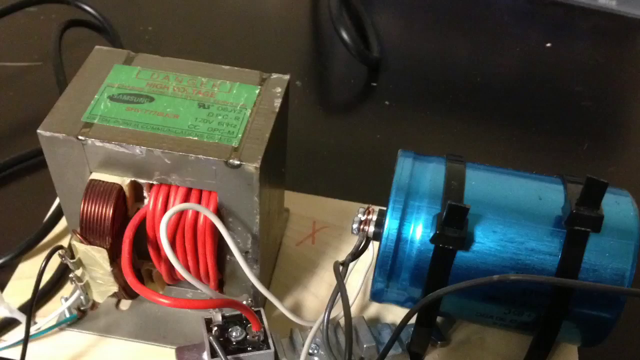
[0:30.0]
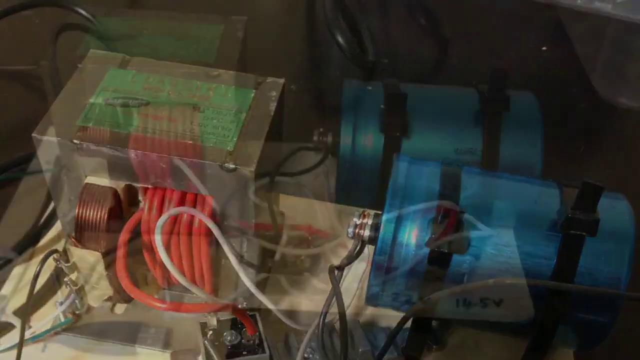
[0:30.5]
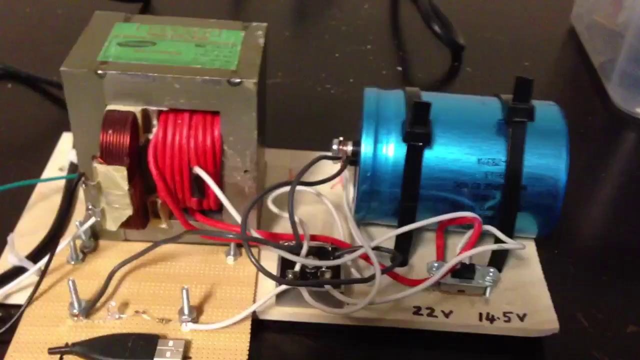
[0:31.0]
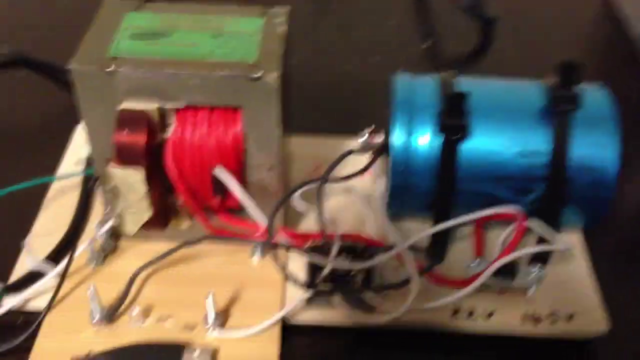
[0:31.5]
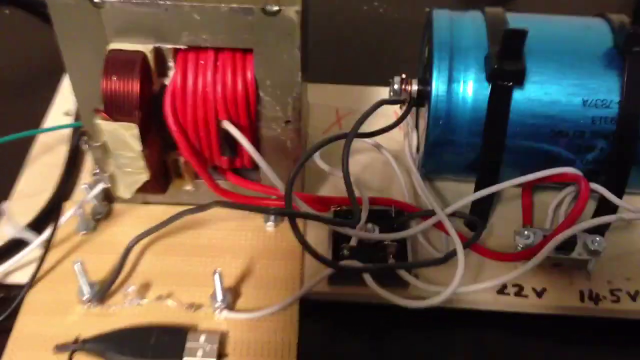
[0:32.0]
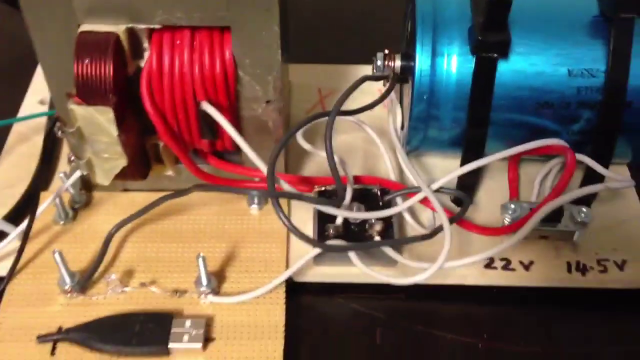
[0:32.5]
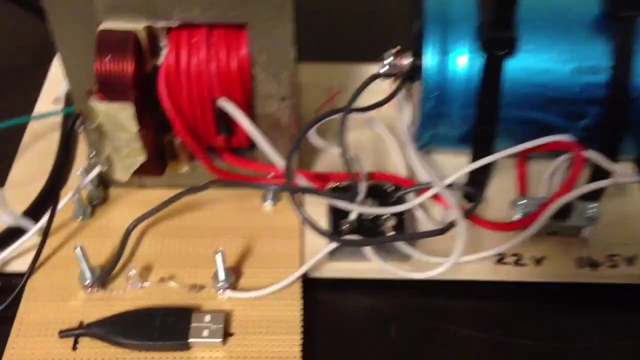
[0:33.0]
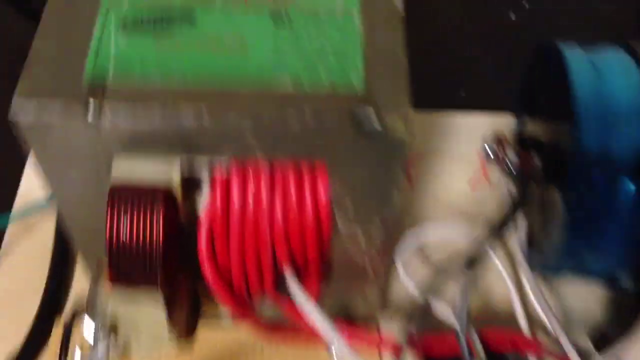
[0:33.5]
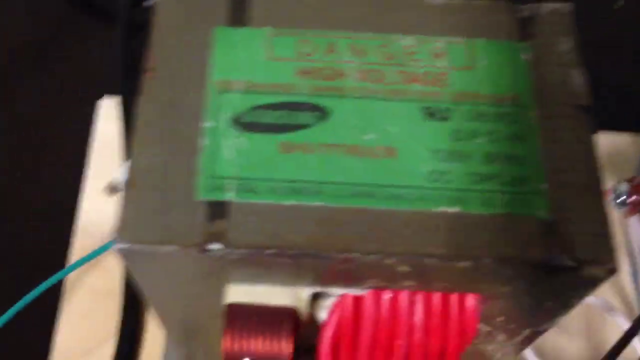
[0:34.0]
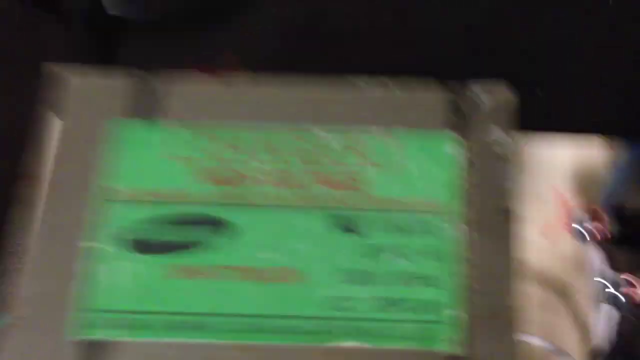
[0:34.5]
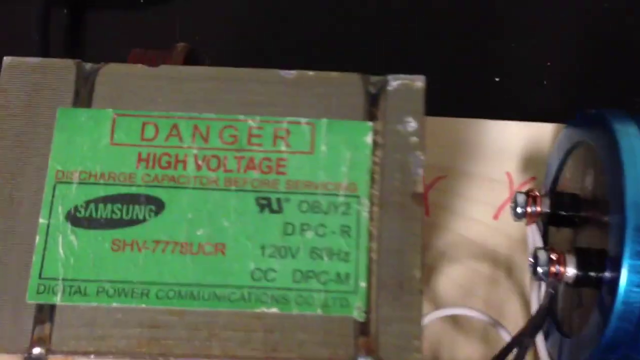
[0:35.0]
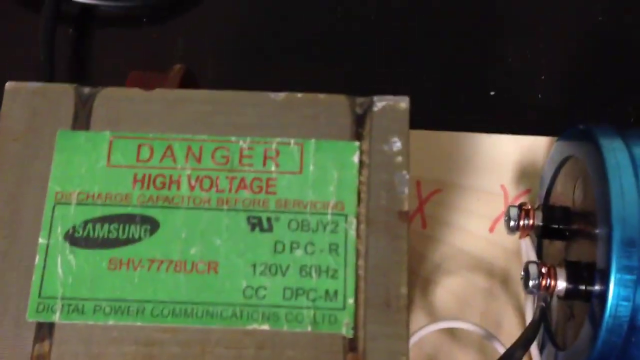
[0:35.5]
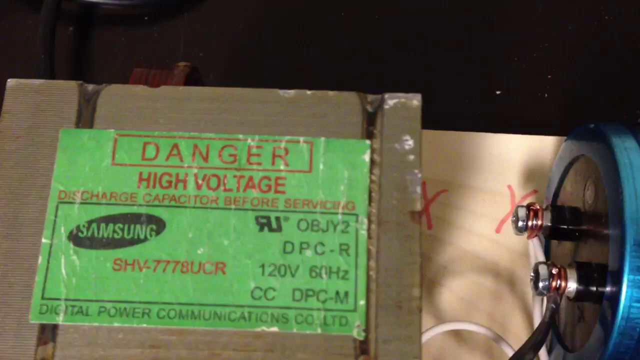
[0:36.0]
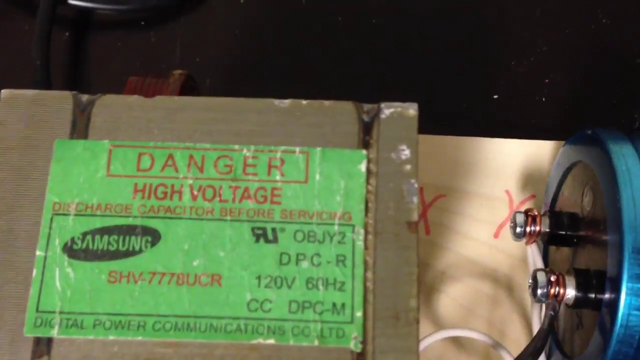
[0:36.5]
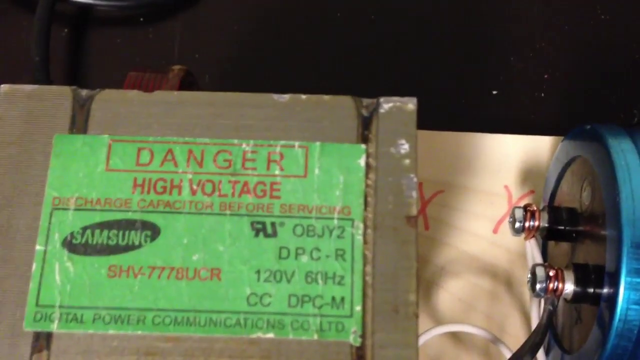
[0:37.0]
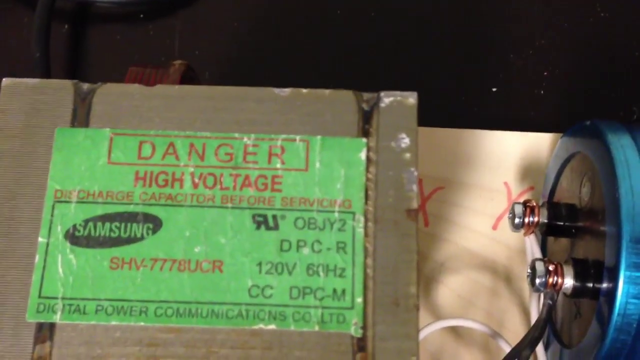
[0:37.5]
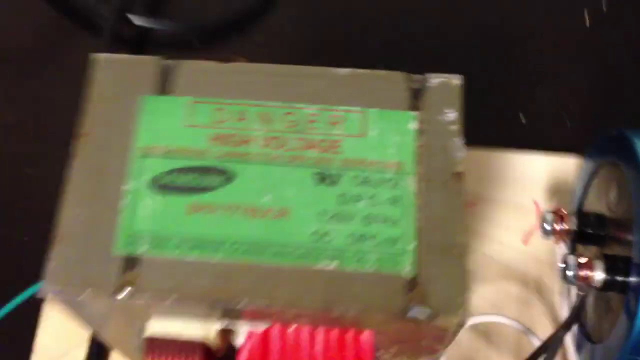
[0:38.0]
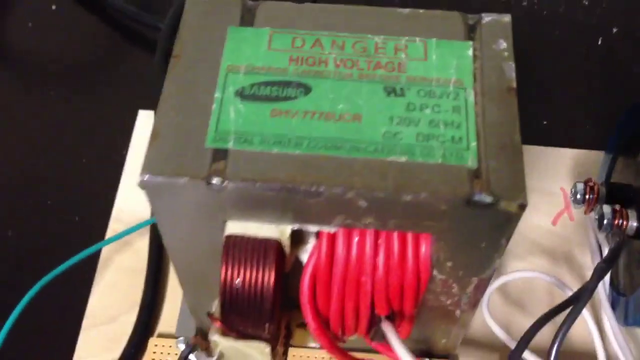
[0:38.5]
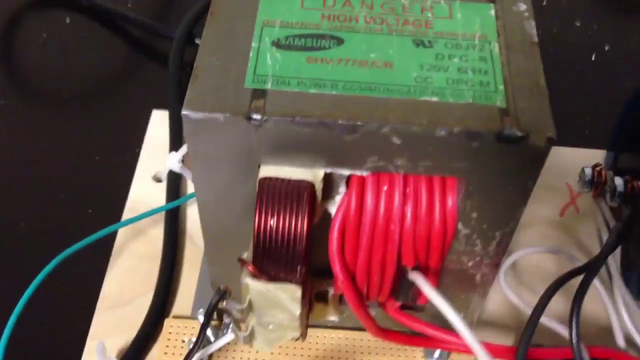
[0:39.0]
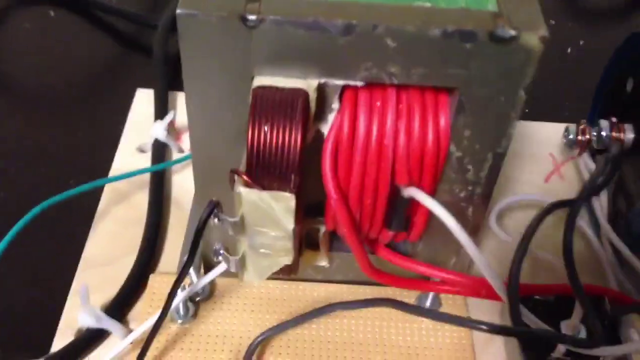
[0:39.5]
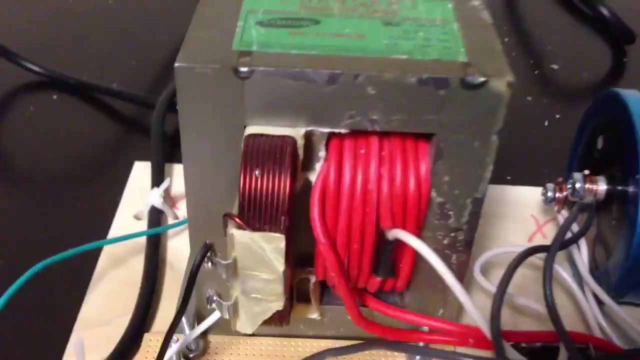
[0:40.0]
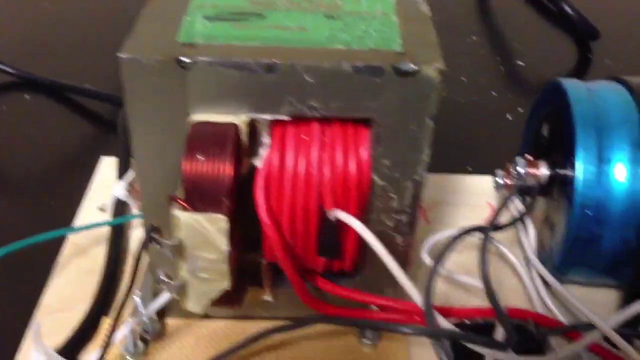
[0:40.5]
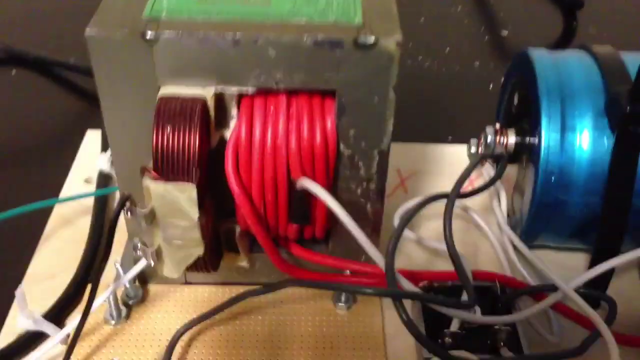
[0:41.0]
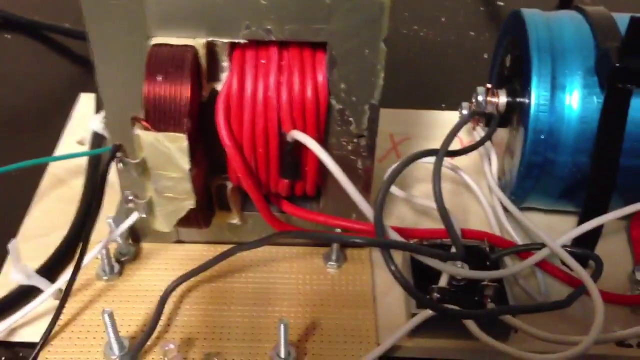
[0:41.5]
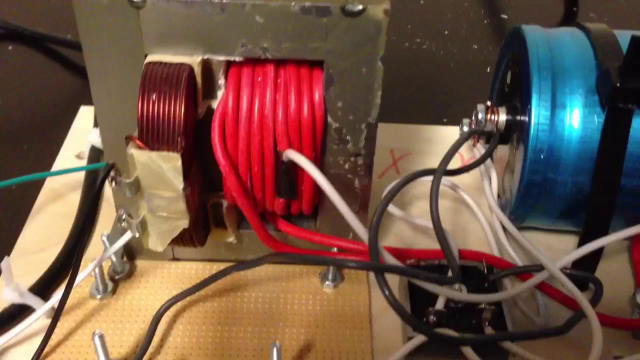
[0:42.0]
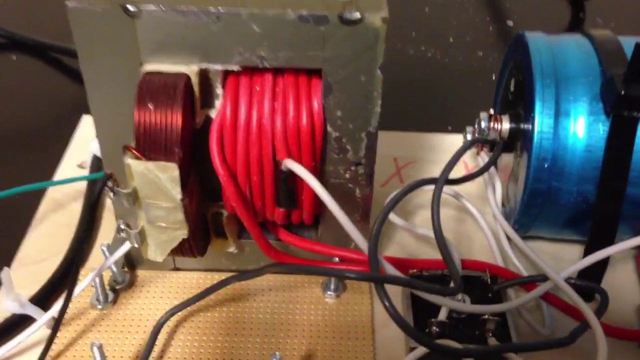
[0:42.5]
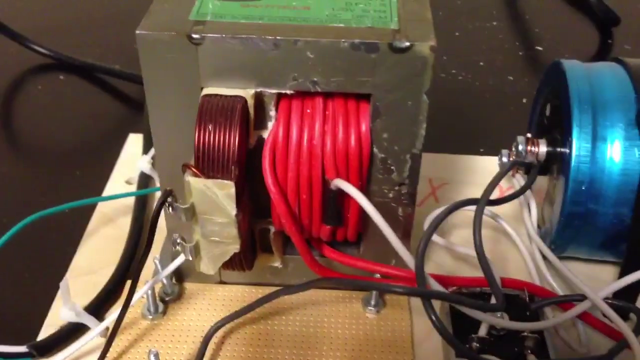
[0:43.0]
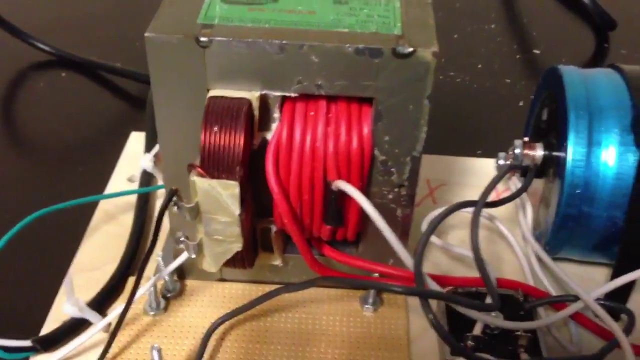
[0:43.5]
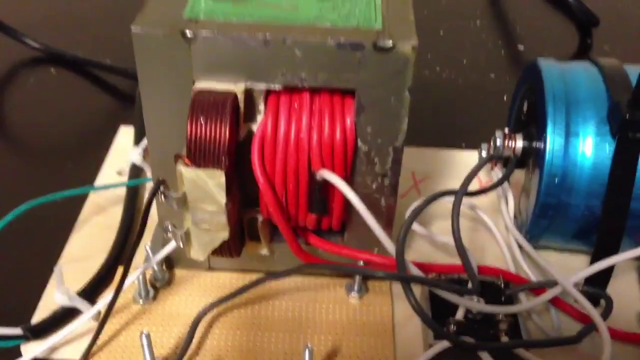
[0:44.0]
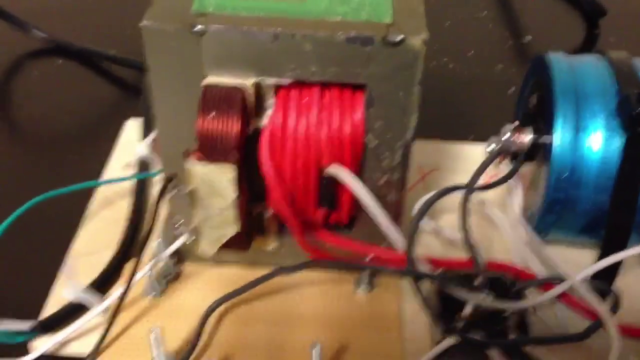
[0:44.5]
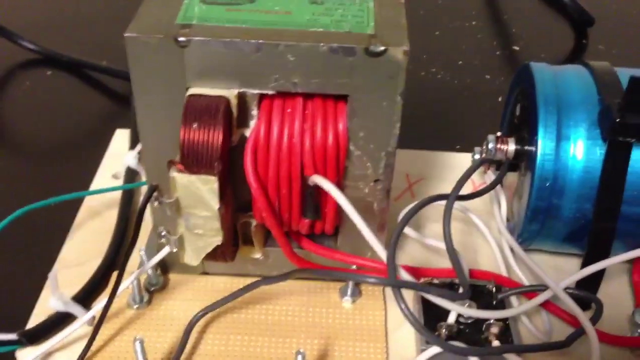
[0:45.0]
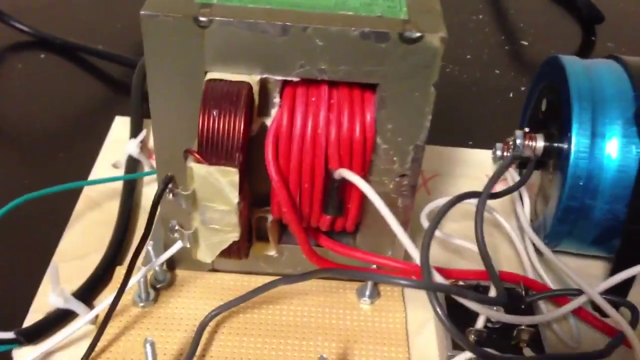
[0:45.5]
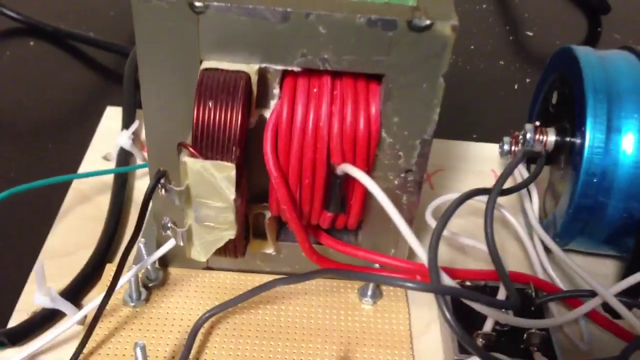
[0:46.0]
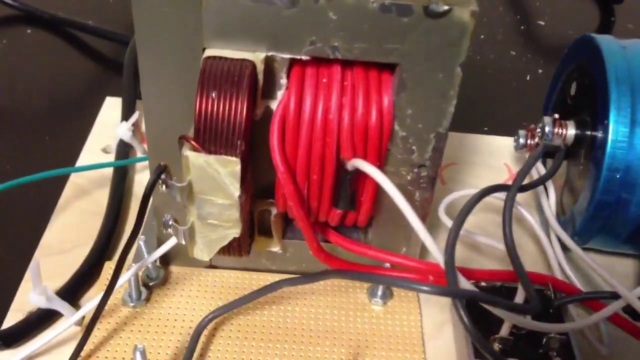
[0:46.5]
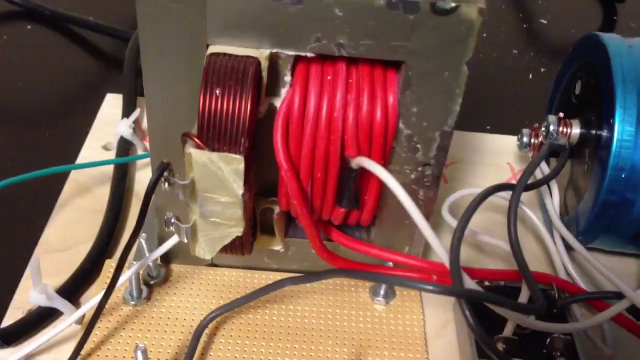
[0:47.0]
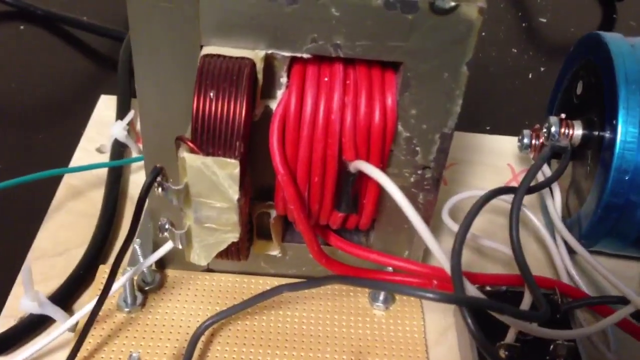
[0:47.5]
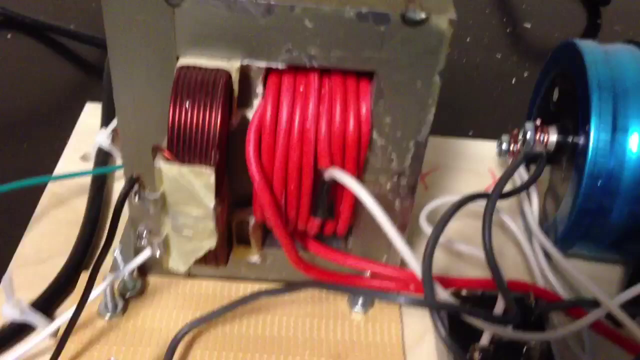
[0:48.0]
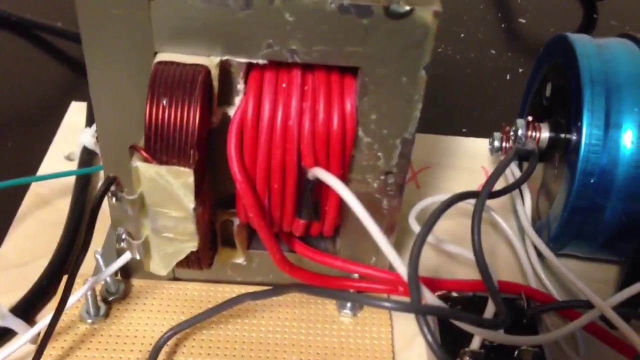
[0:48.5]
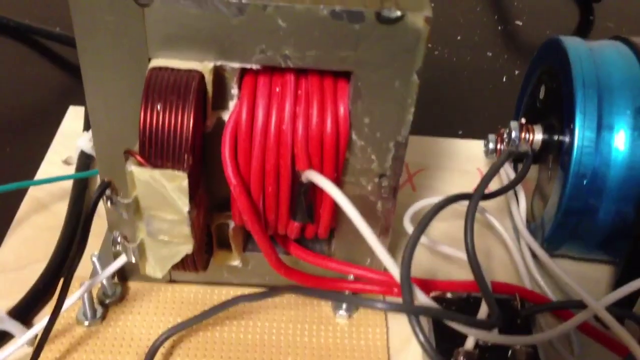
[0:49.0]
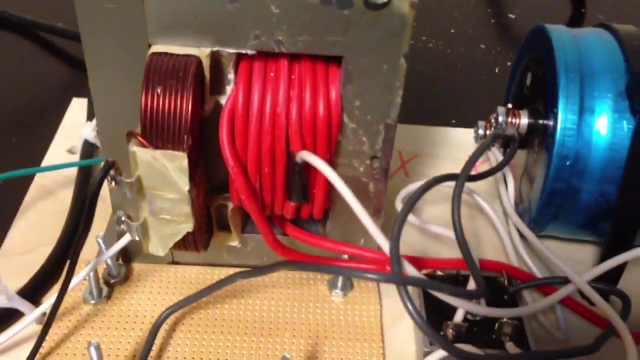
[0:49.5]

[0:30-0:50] A live camera feed is focused on the block with the blue cylinder and the block with the red wires in it. In front of that block is another board with four pegs, one at each corner, each with a nut at its base. The camera work is wobbly, and a shadow briefly passes across. The camera moves in on the green label on top of the block with the red wires. The label shows the text "Danger" in red, enclosed by a rectangle, along with "high voltage". Beneath the red text is a black rectangle; in its upper left-hand corner is the Samsung logo with a serial number in red beneath it, and along its right side, spanning its full height, are a number of serial numbers and a voltage of 120 volts. The camera stays on the label for a few seconds, then moves down to the red wires on the block, wobbling slightly left and right and then very slightly up and down.